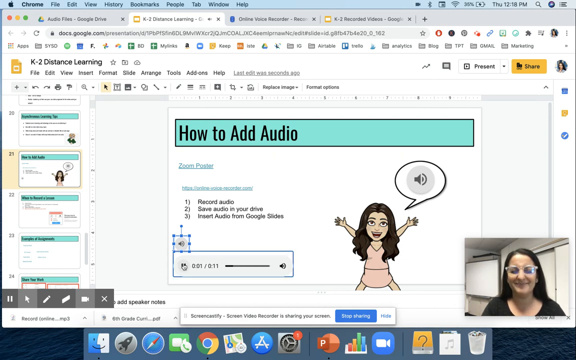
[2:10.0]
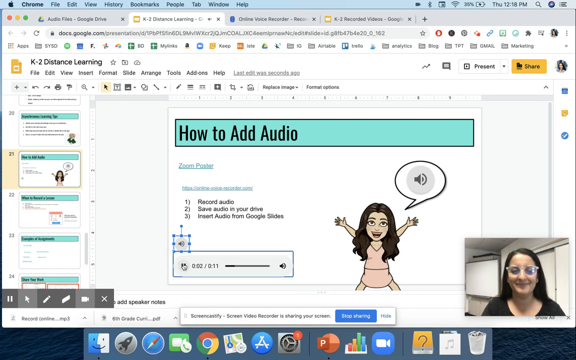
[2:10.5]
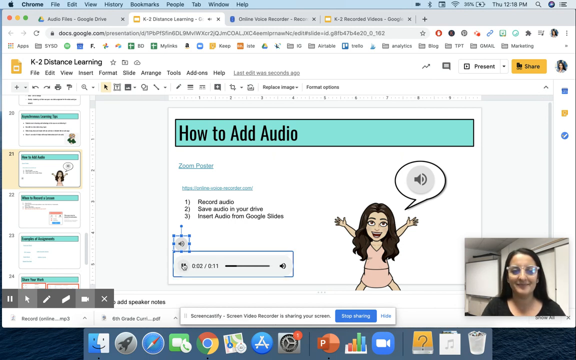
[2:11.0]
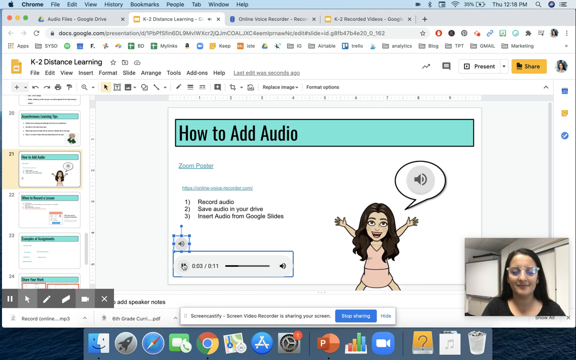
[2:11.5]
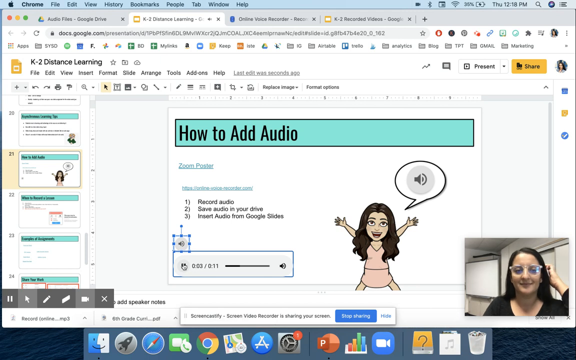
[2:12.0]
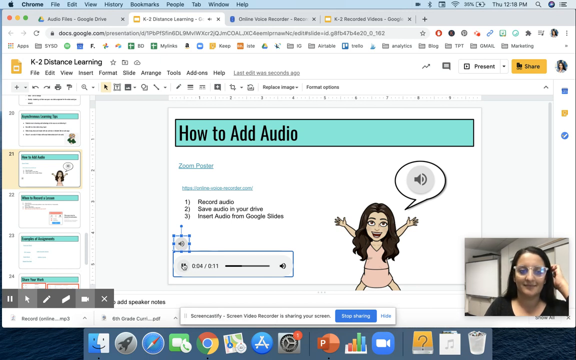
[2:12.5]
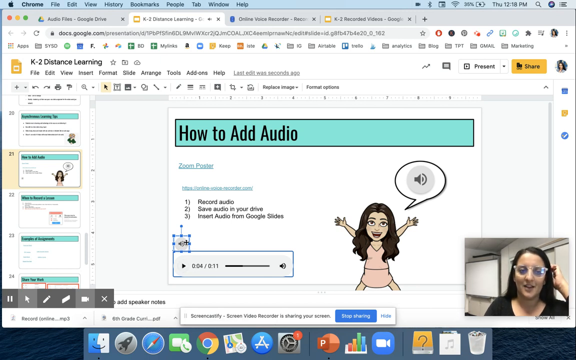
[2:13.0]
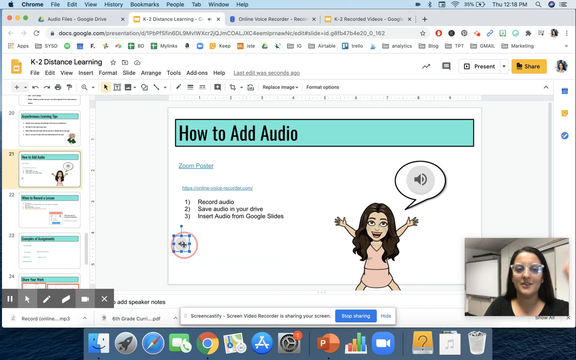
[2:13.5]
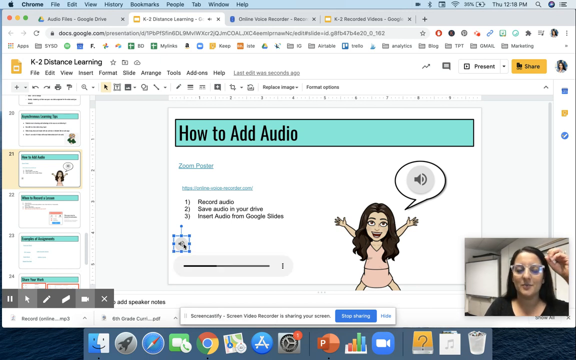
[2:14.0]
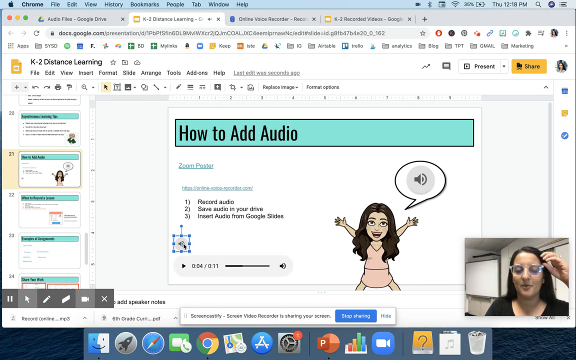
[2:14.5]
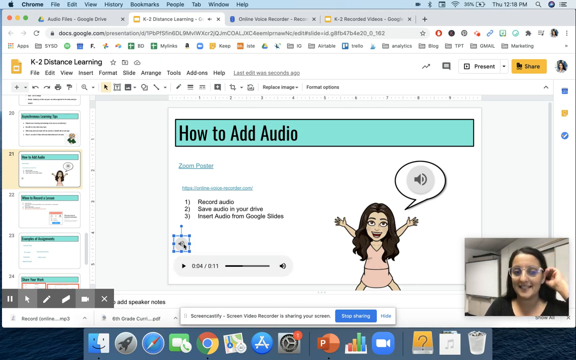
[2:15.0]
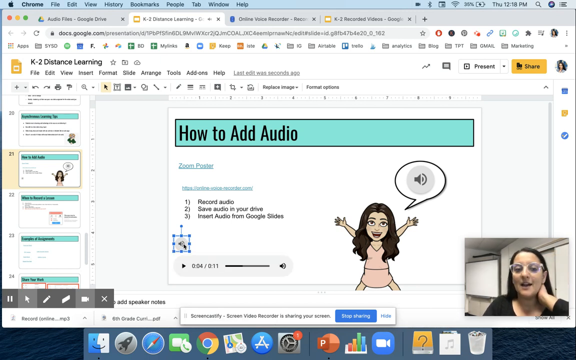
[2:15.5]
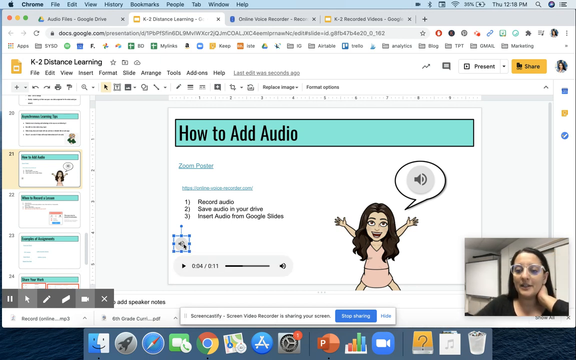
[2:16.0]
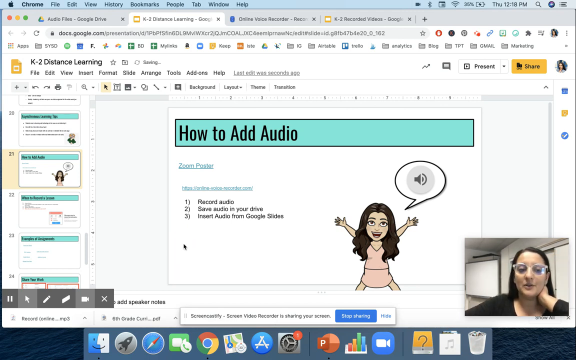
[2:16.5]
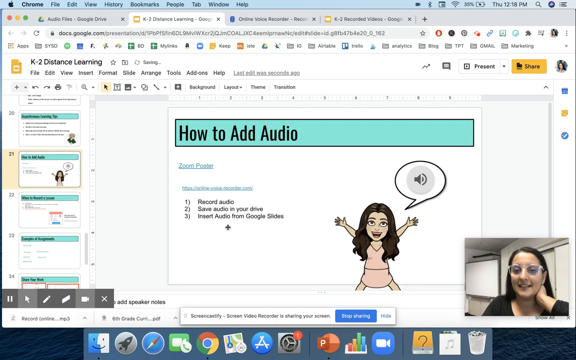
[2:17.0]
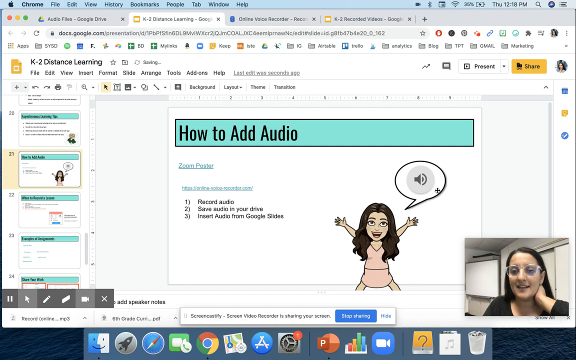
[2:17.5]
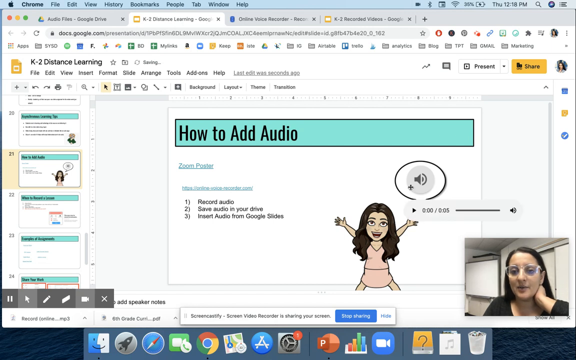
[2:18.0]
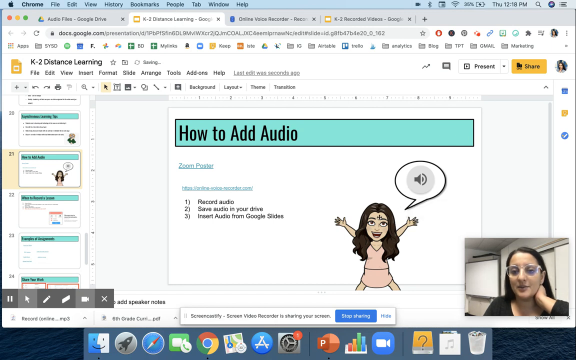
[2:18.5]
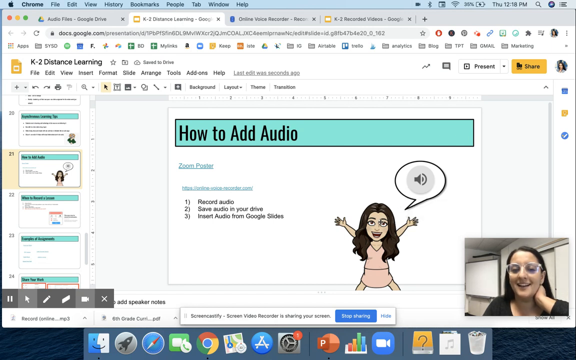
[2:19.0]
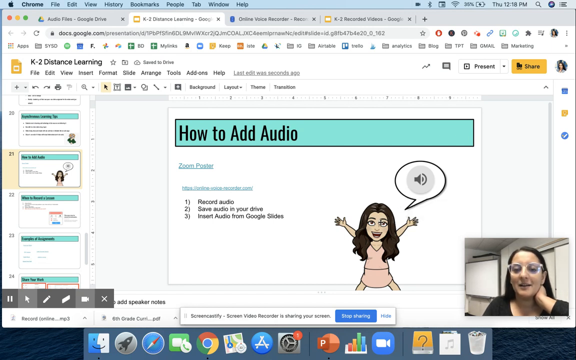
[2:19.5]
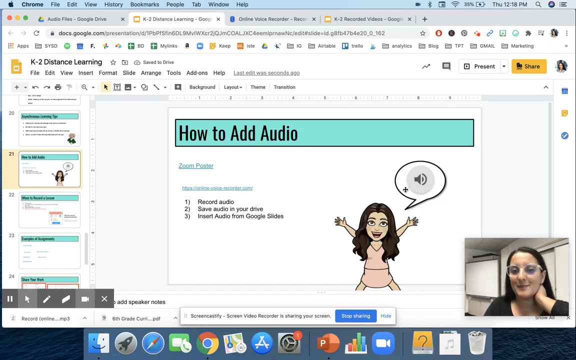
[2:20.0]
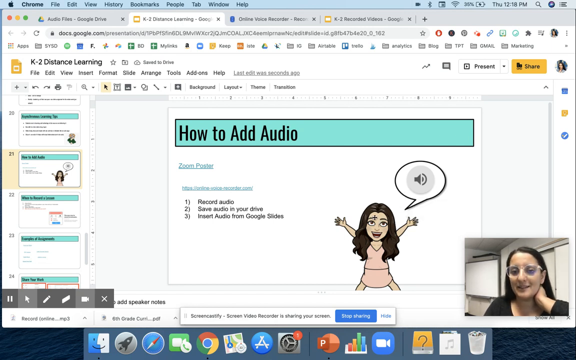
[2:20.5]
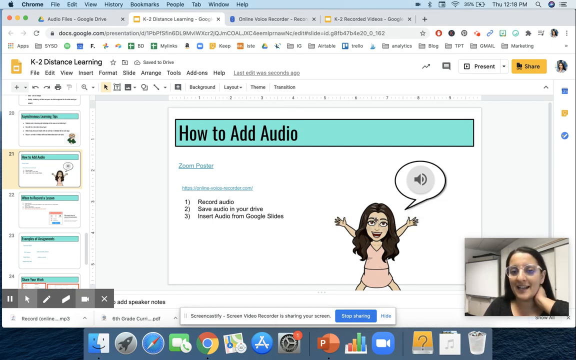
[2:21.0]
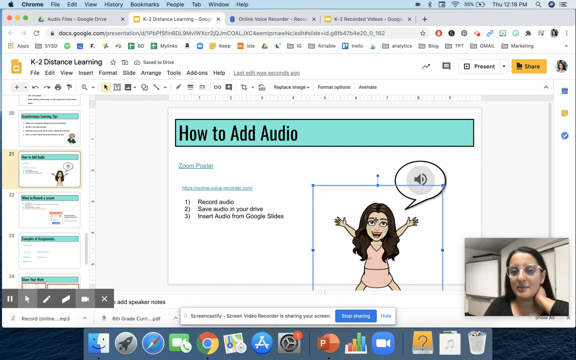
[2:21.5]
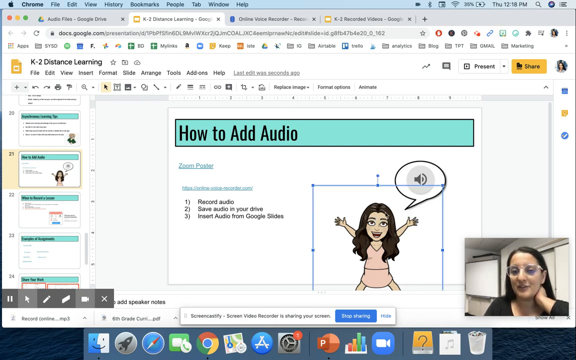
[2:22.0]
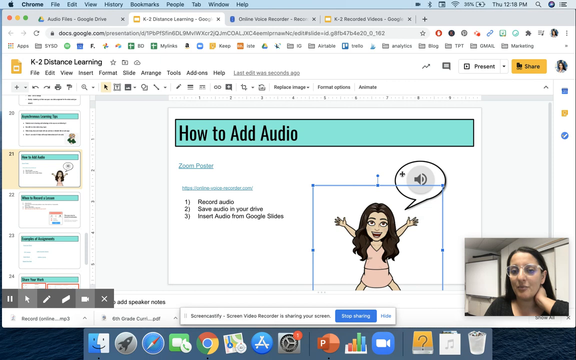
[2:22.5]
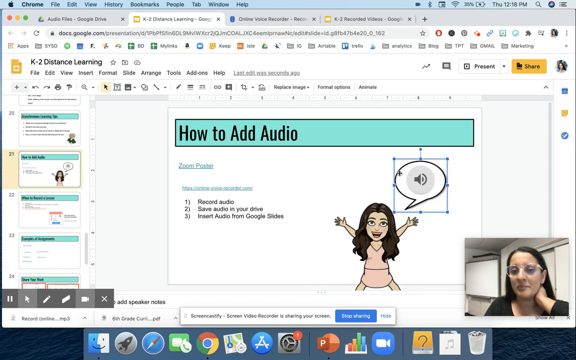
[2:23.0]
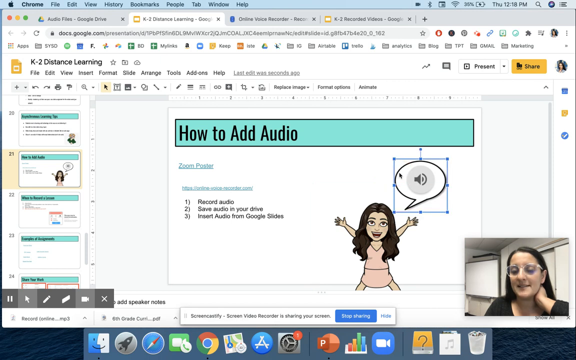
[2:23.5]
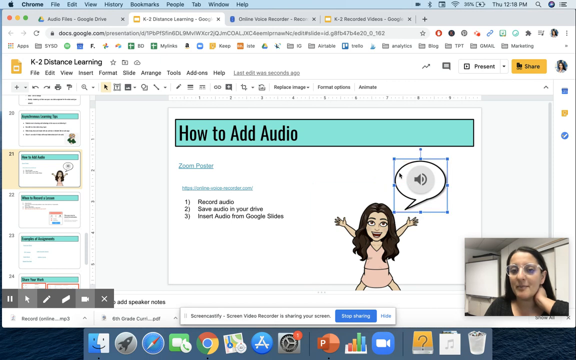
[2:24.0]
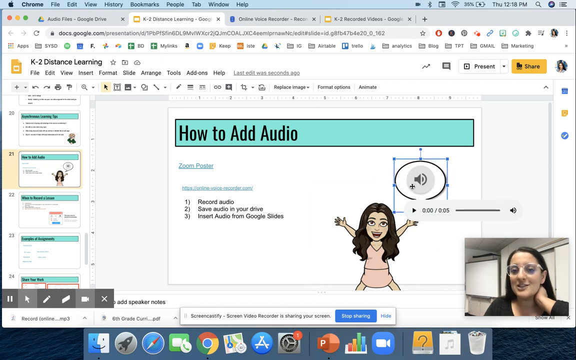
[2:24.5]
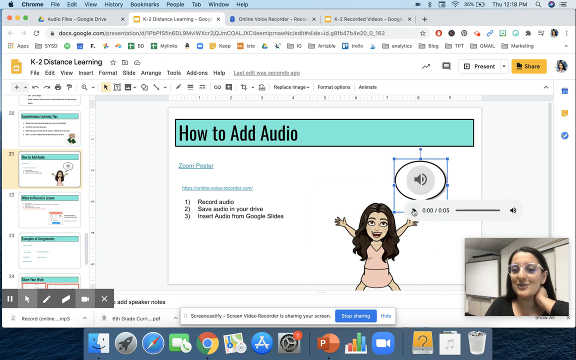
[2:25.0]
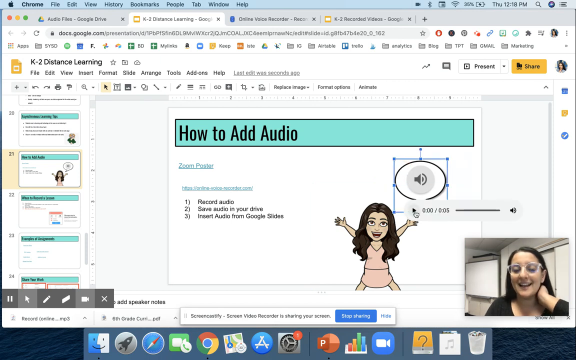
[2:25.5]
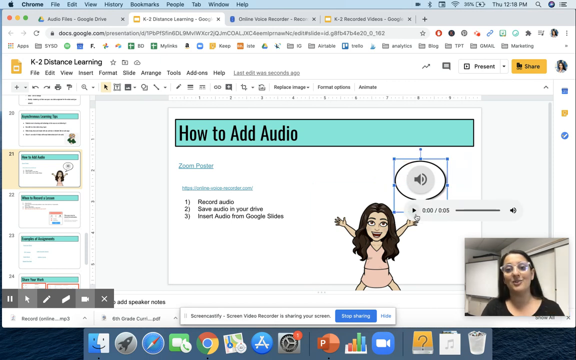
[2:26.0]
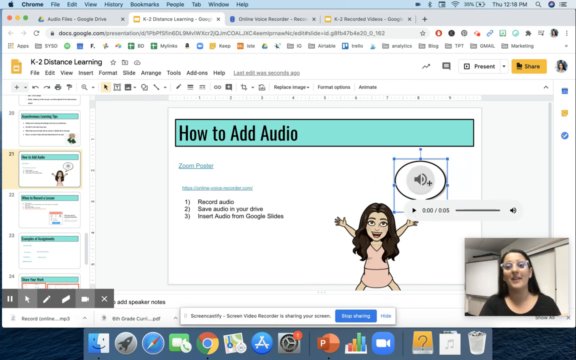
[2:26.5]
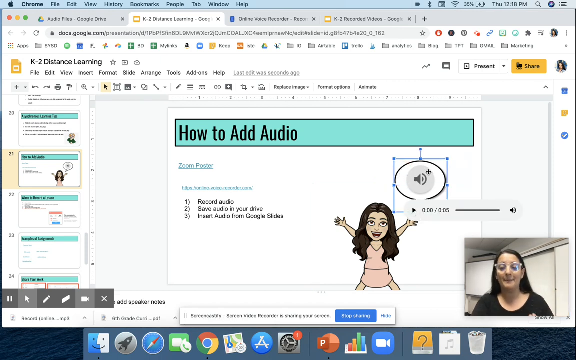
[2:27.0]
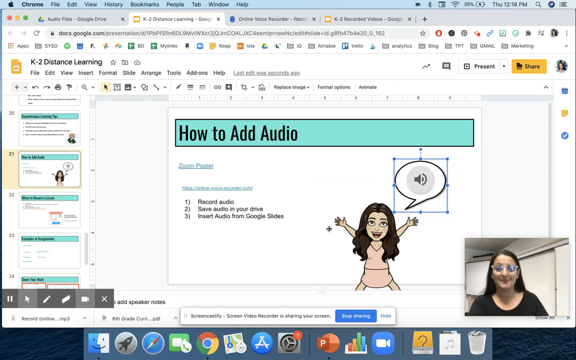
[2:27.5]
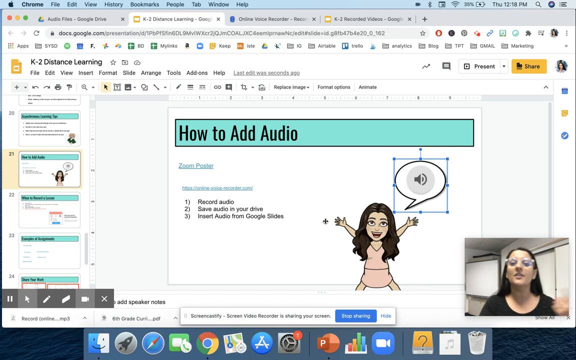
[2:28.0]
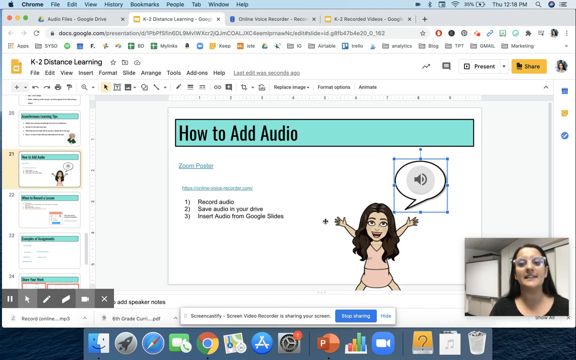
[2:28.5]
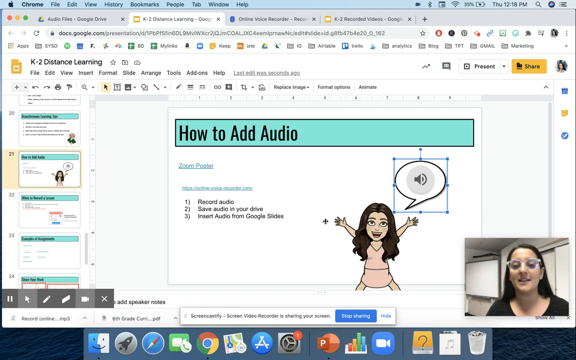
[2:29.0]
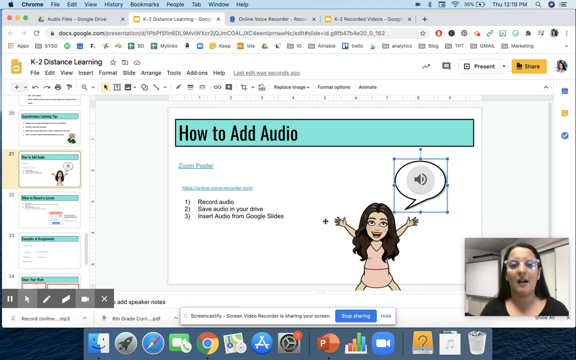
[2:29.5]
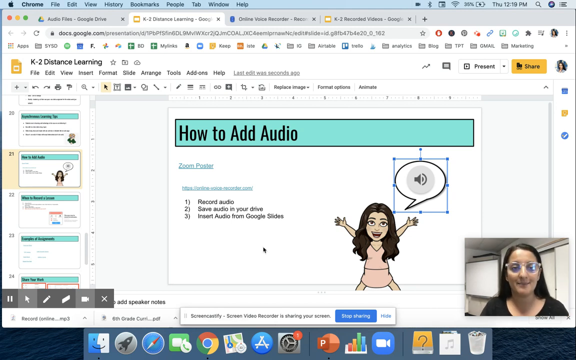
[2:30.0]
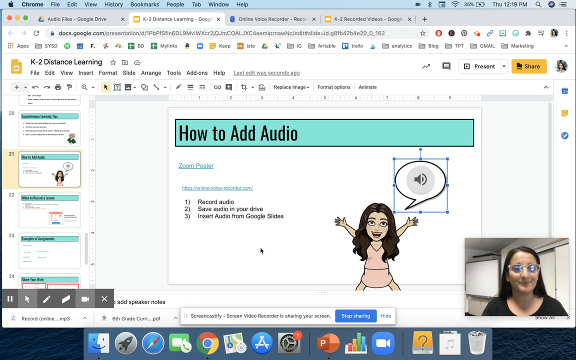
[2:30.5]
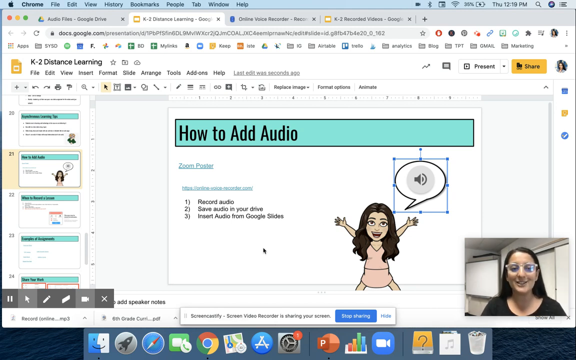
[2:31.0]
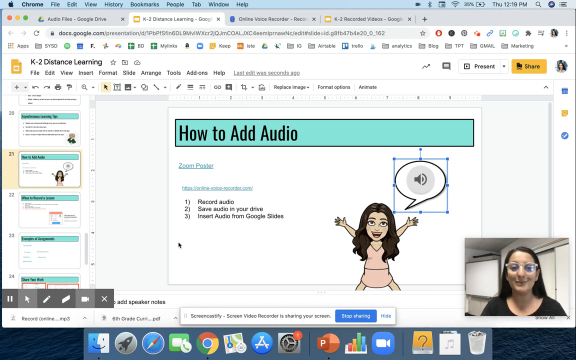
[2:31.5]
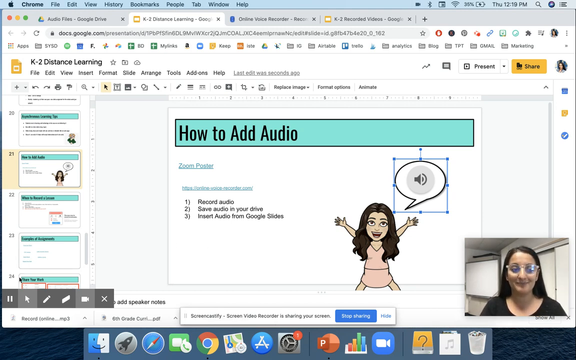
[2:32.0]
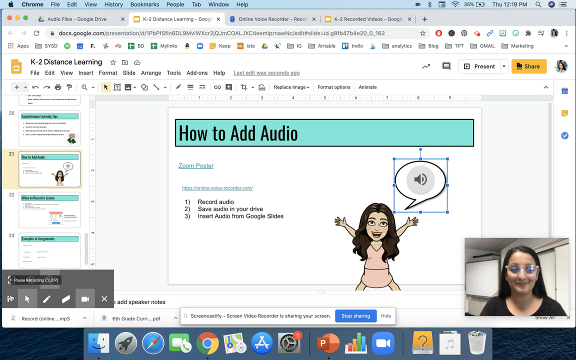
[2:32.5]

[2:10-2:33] The teacher, a woman appearing to be in her late 20s with long brown hair, a dark shirt and clear glasses, live streams from a window in the bottom right-hand corner of the screen. She shares a Google Slides presentation about how to add audio to a slide. She clicks on the audio icon that was just added to the title page, then deletes it. She then clicks around the title page on different elements, including speech bubbles and a little meme person; the purpose of these actions is unclear, but she is presumably discussing different ways to add audio to a page or build it into page elements in Google Slides presentations.